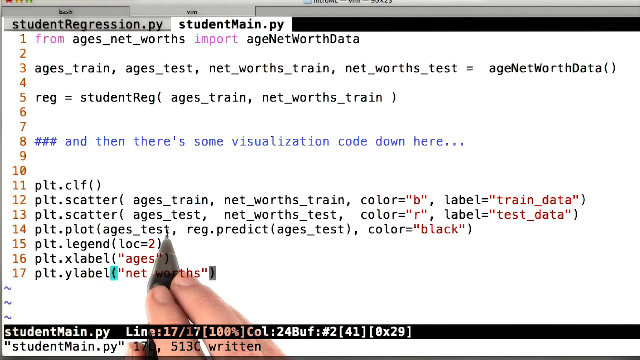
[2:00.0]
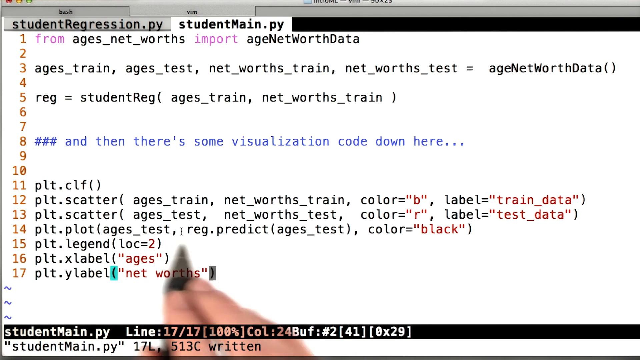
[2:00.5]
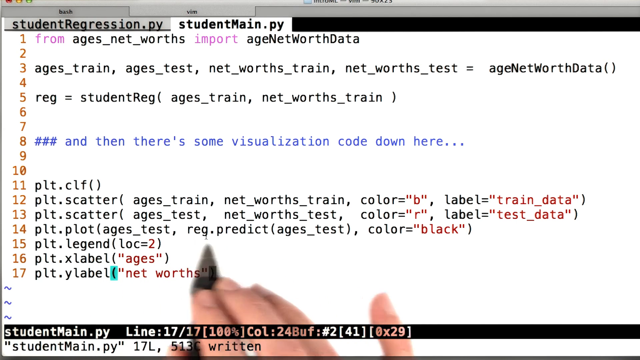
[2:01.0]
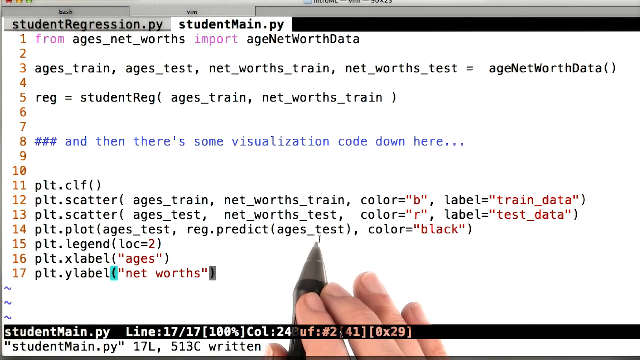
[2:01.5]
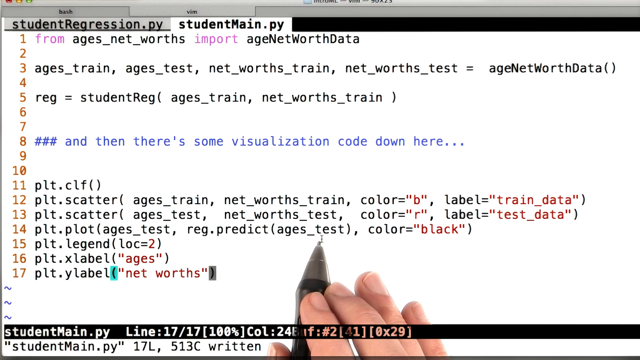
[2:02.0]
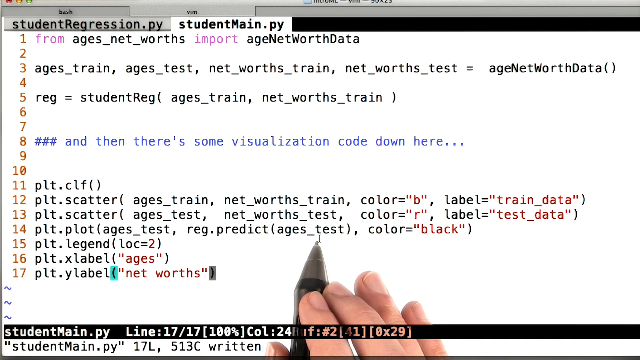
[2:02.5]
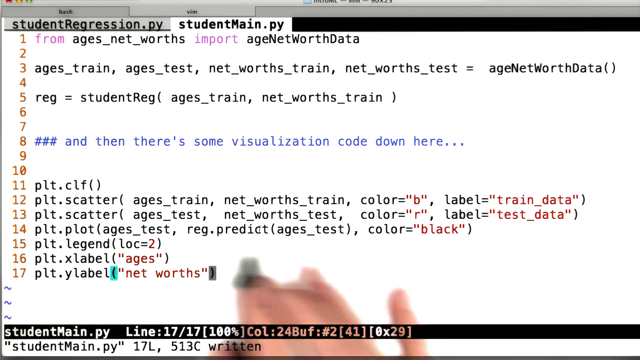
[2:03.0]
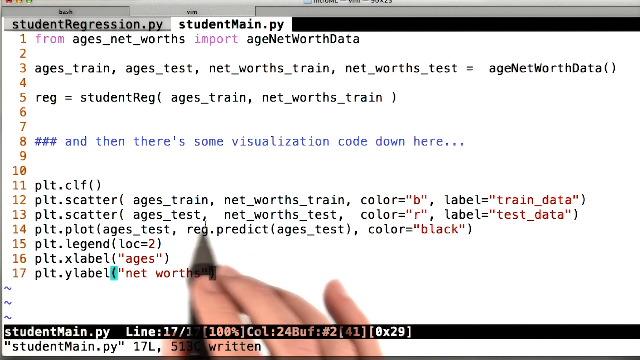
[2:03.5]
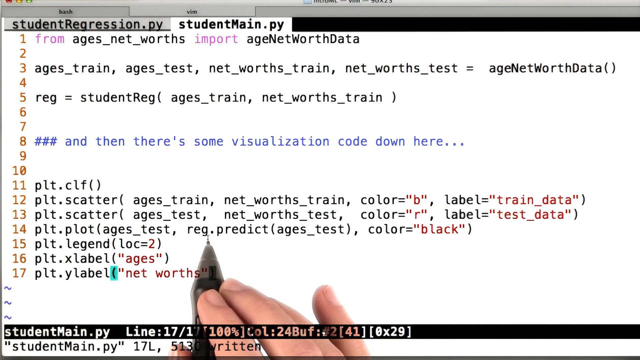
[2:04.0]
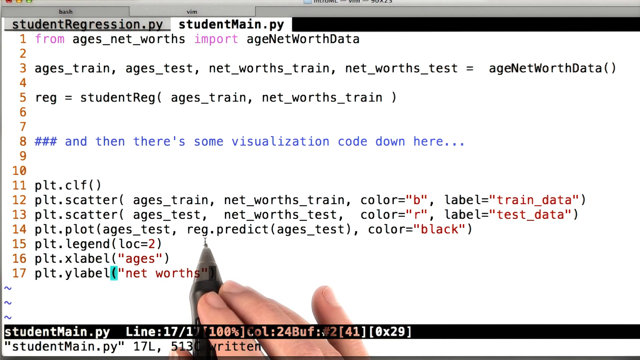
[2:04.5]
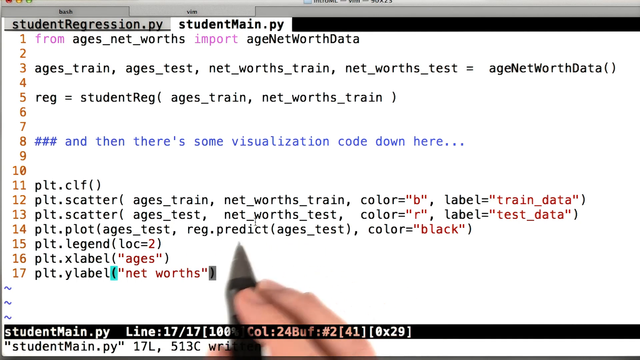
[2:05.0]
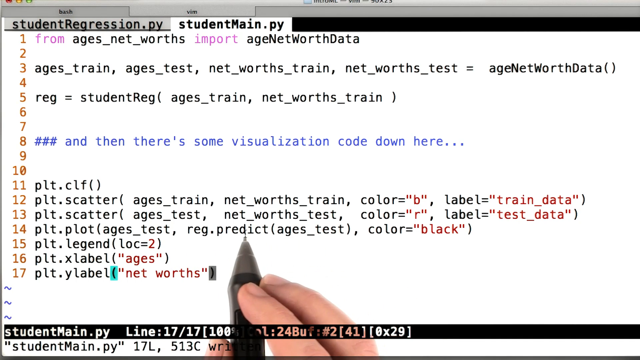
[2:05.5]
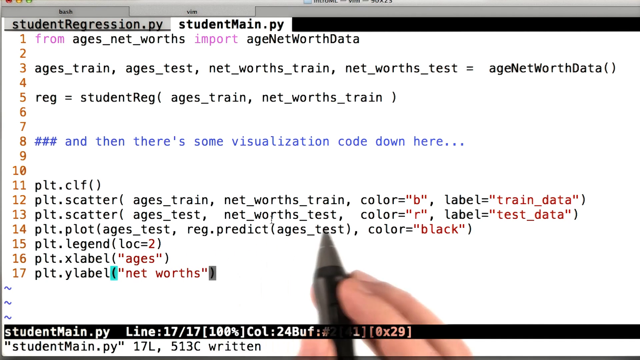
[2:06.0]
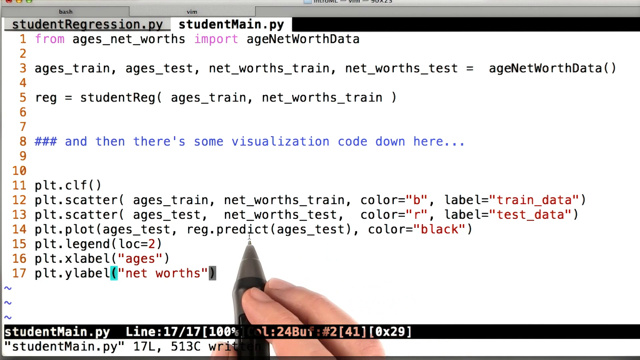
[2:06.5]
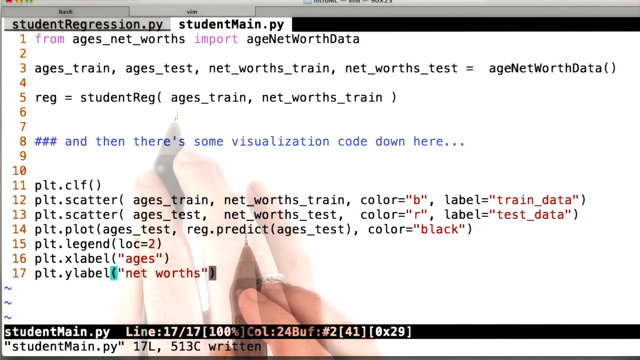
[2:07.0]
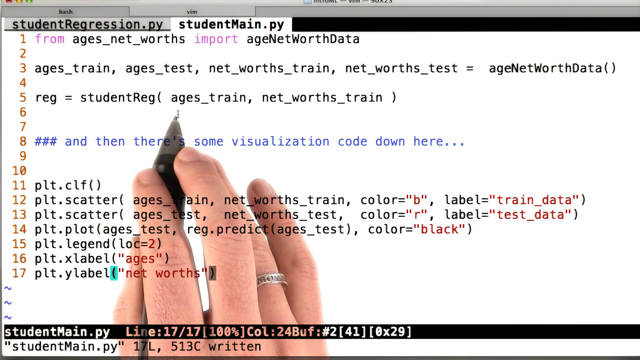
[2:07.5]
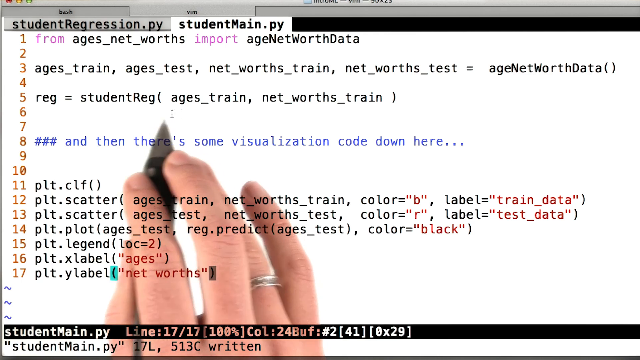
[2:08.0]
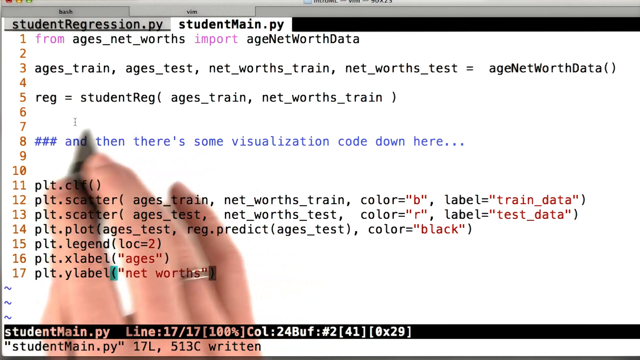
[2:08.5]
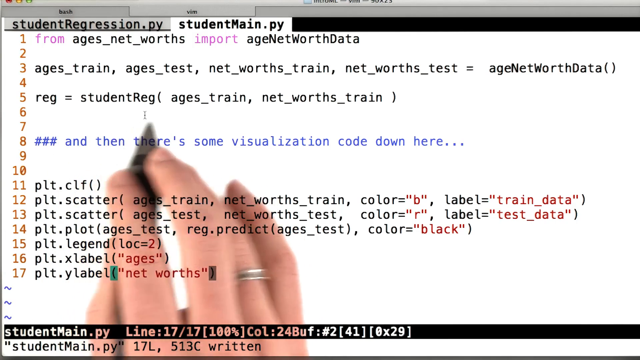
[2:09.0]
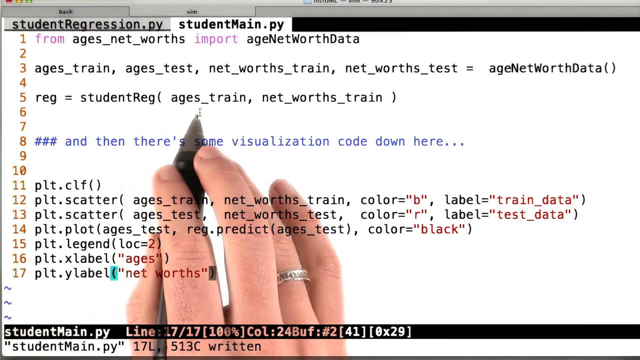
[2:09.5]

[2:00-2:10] The focus moves to the visualization part of the Python file, apparently the plot function, which uses ages test. A reg predict ages test variable is also passed into the plot and is coloured black.